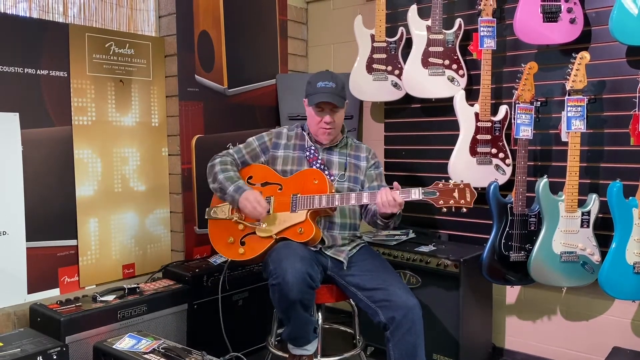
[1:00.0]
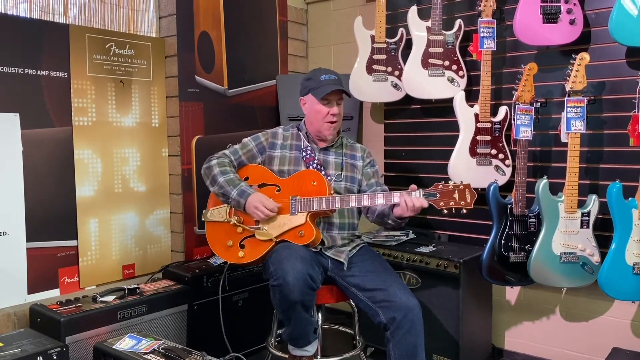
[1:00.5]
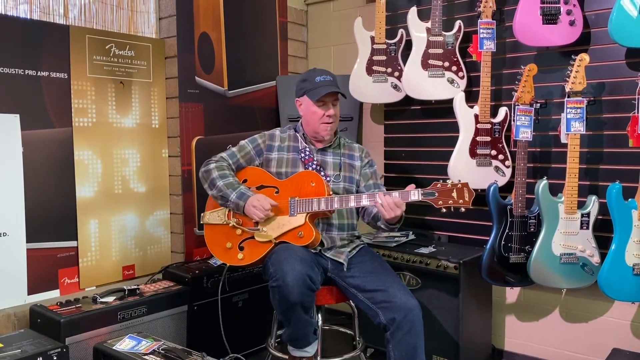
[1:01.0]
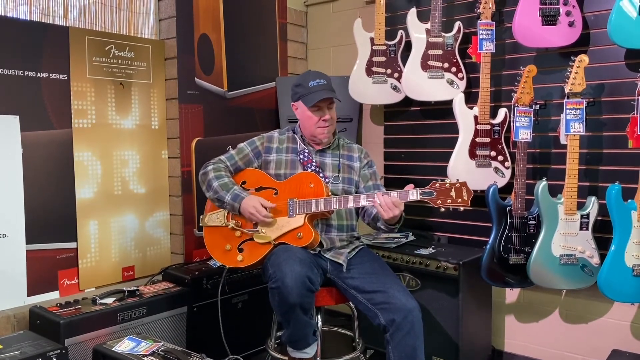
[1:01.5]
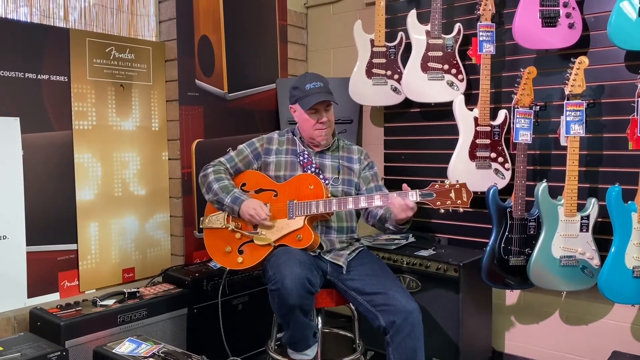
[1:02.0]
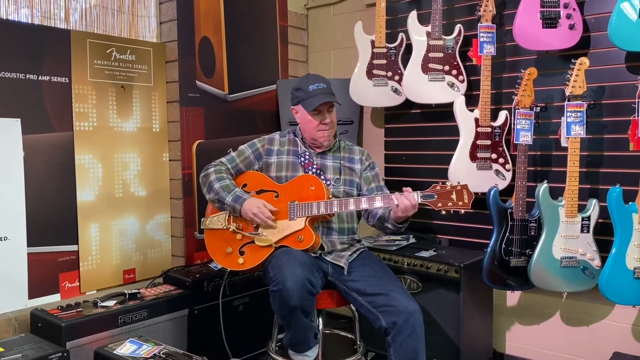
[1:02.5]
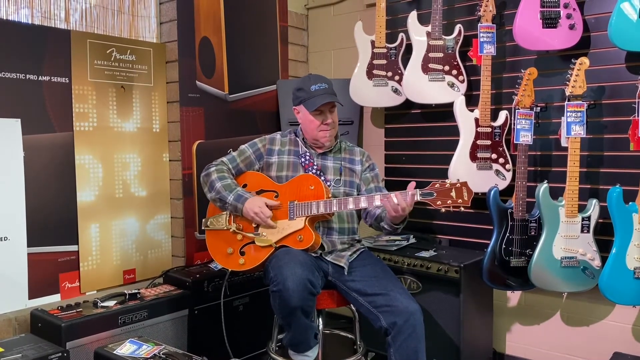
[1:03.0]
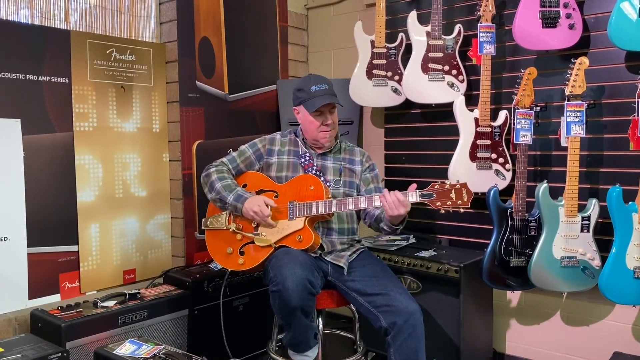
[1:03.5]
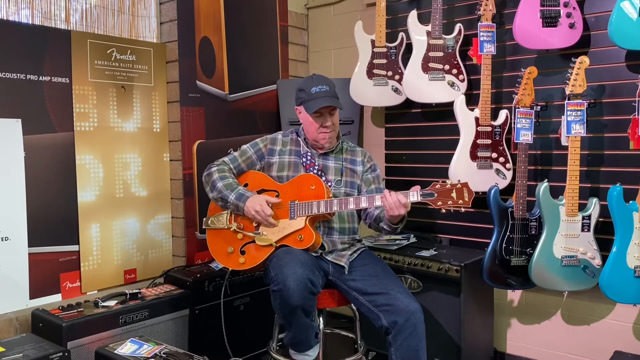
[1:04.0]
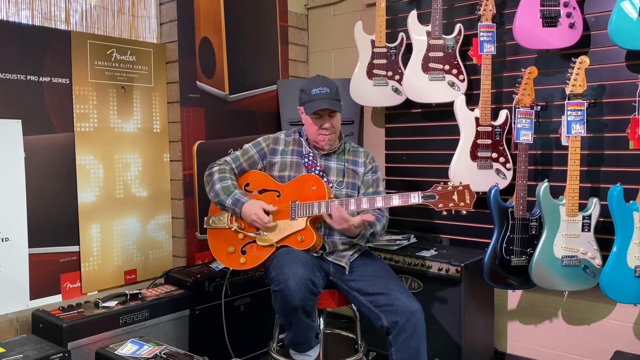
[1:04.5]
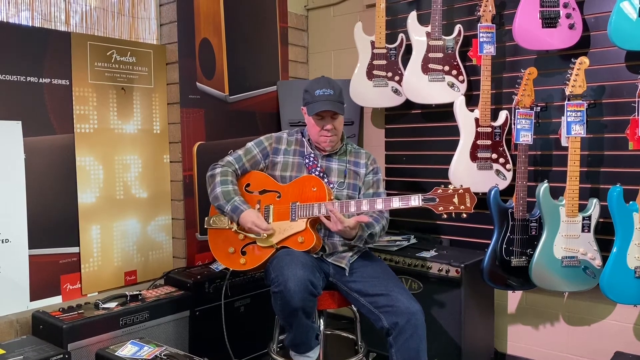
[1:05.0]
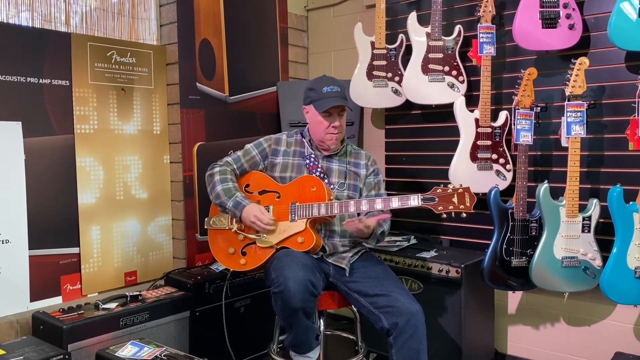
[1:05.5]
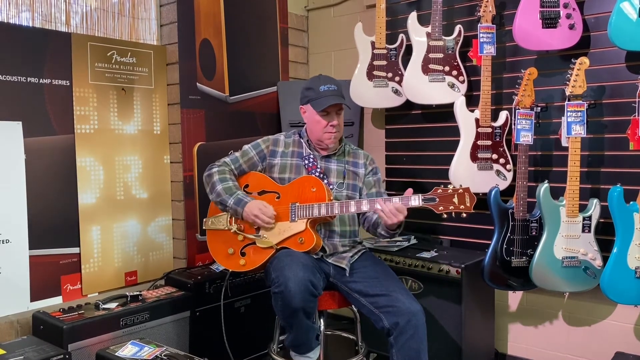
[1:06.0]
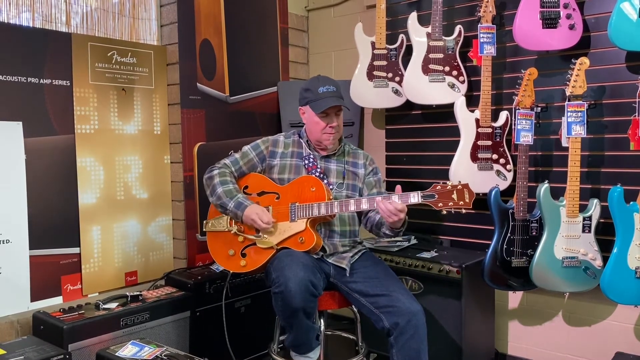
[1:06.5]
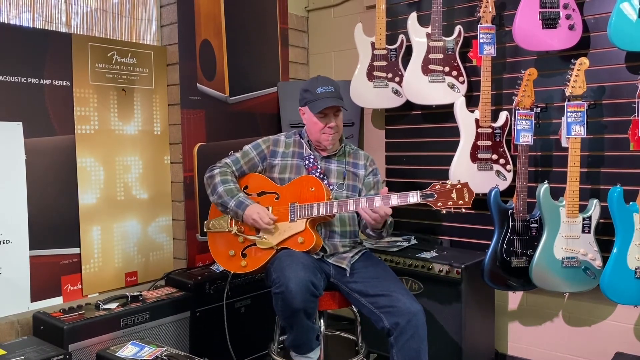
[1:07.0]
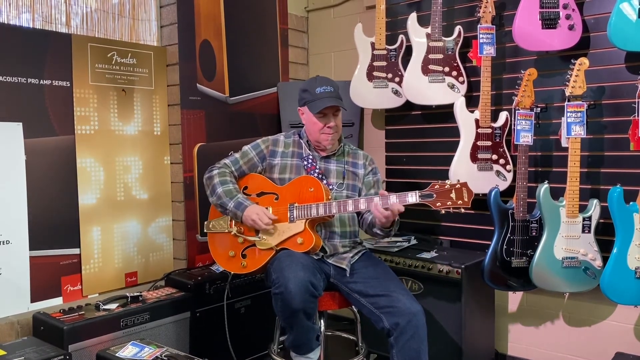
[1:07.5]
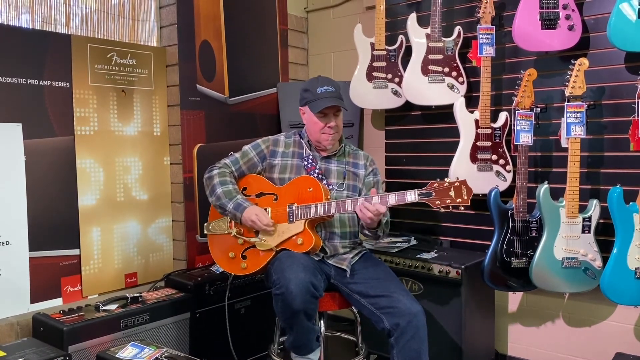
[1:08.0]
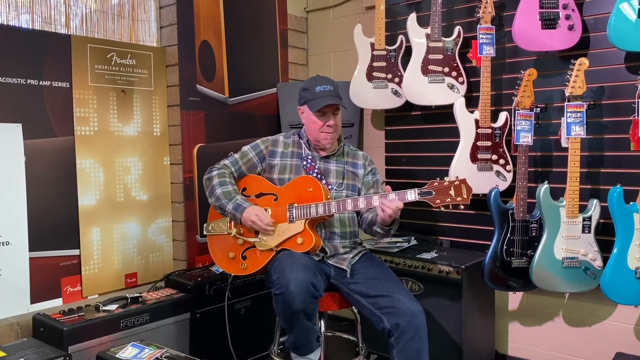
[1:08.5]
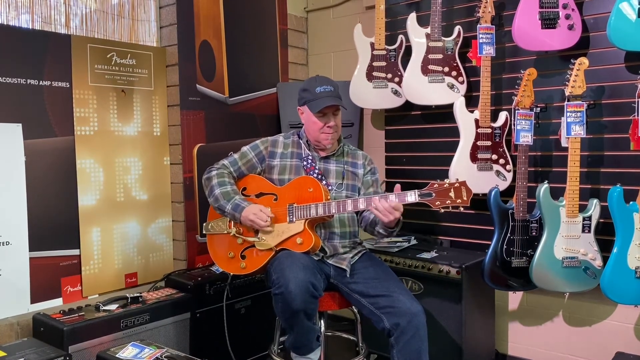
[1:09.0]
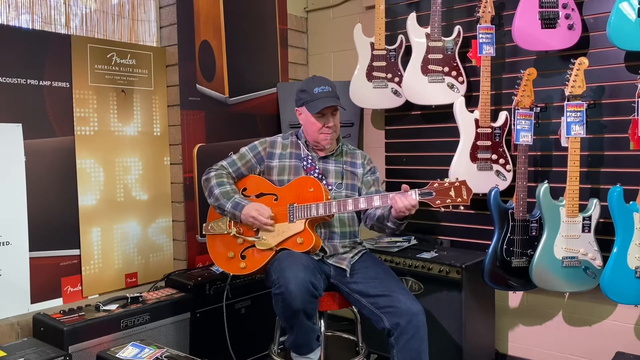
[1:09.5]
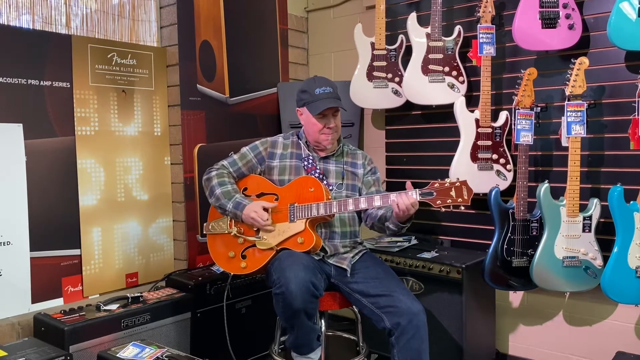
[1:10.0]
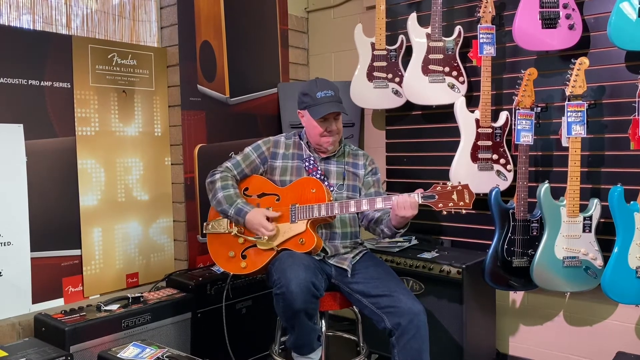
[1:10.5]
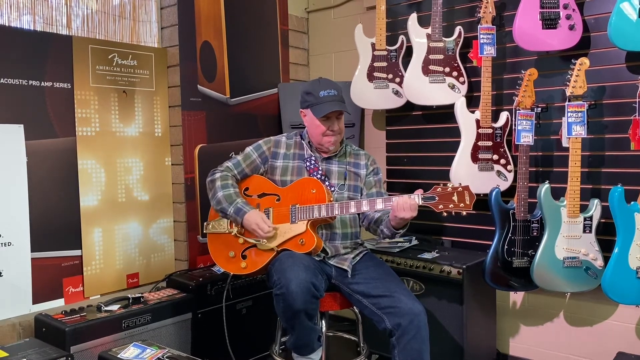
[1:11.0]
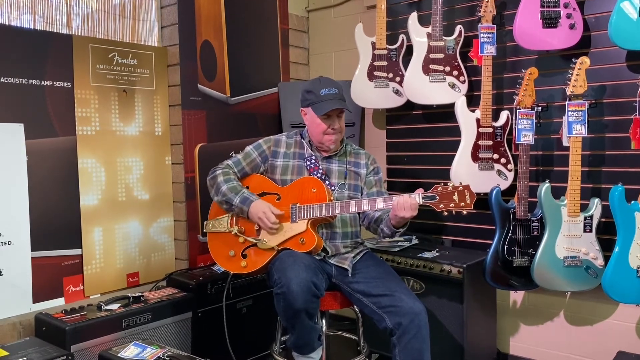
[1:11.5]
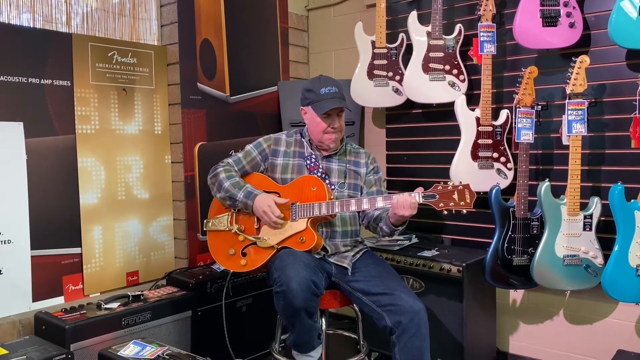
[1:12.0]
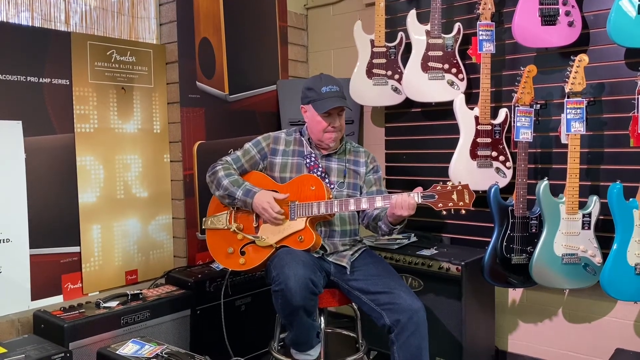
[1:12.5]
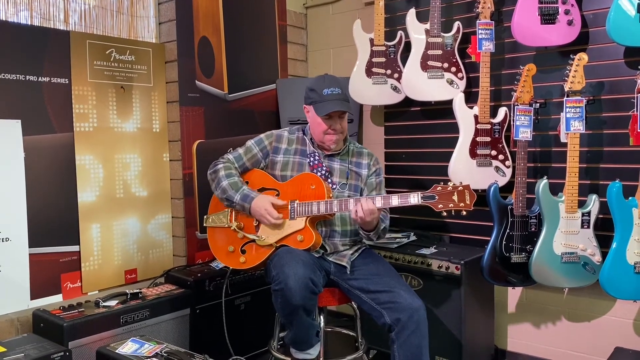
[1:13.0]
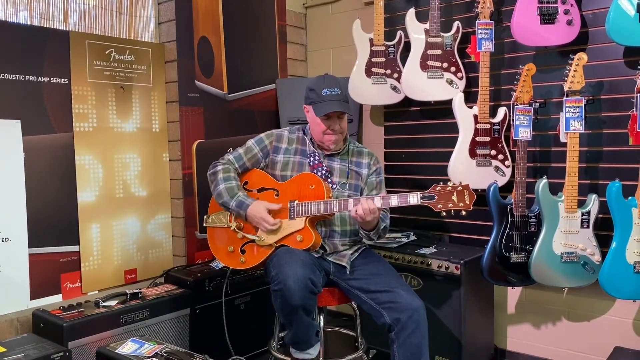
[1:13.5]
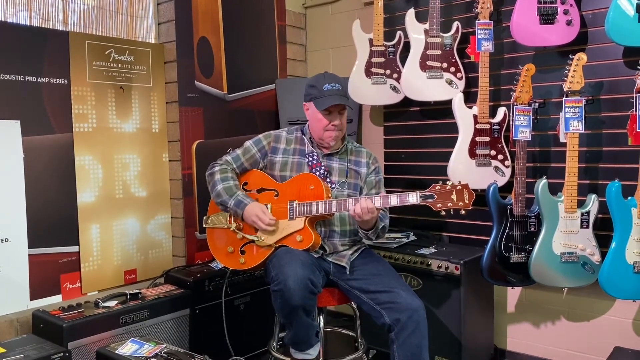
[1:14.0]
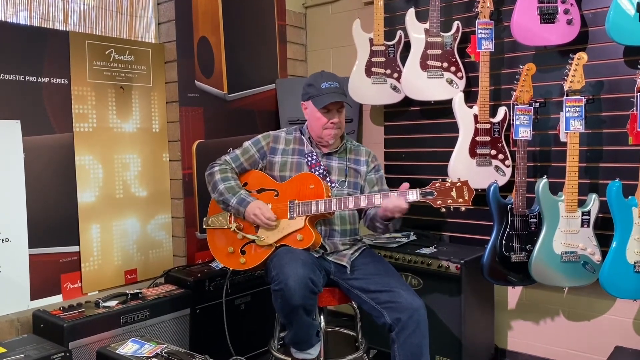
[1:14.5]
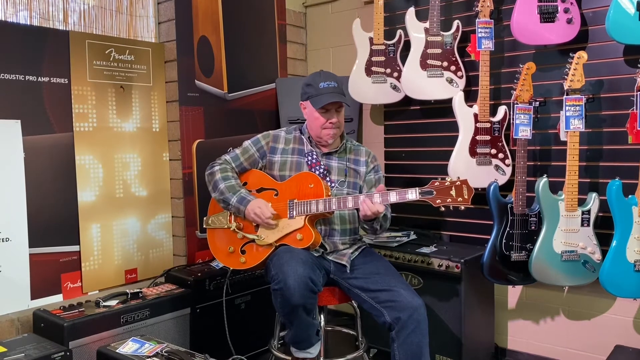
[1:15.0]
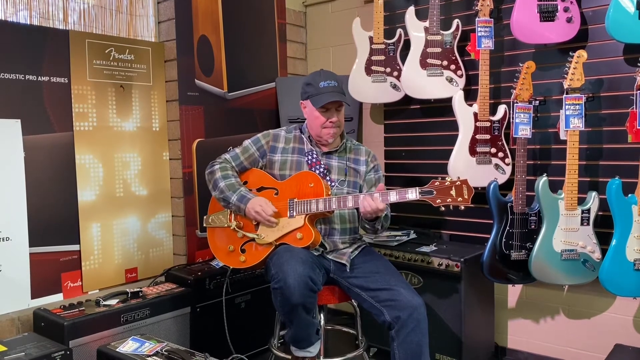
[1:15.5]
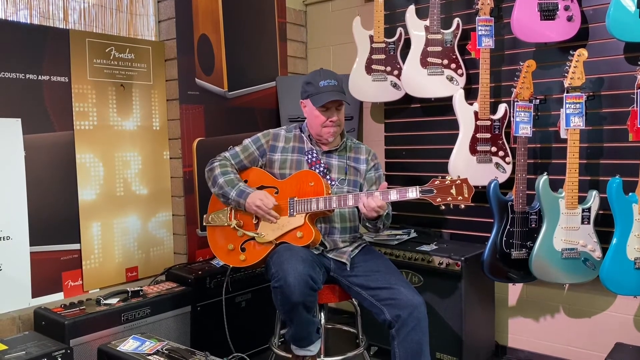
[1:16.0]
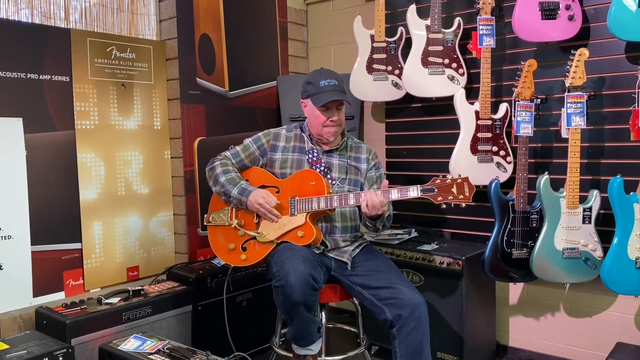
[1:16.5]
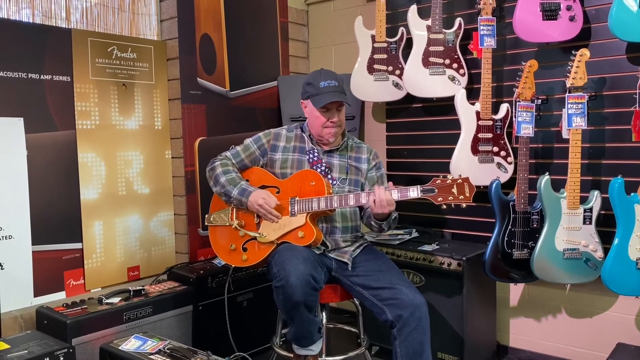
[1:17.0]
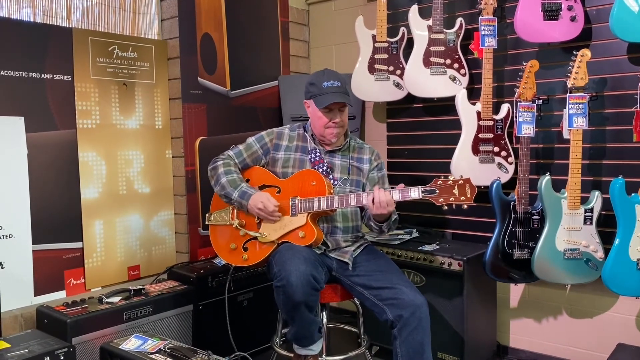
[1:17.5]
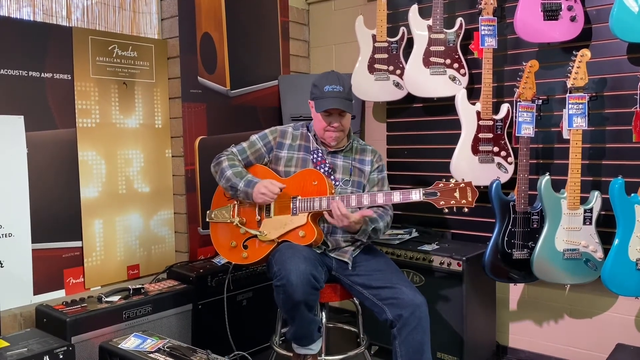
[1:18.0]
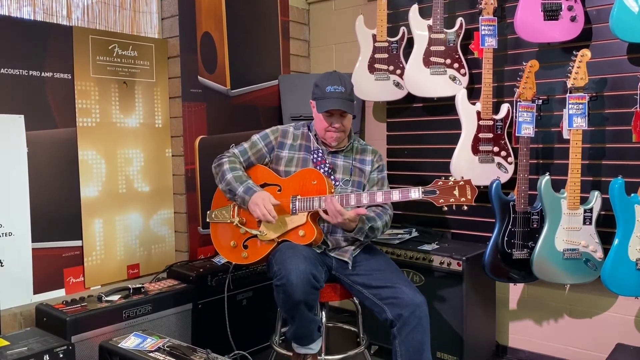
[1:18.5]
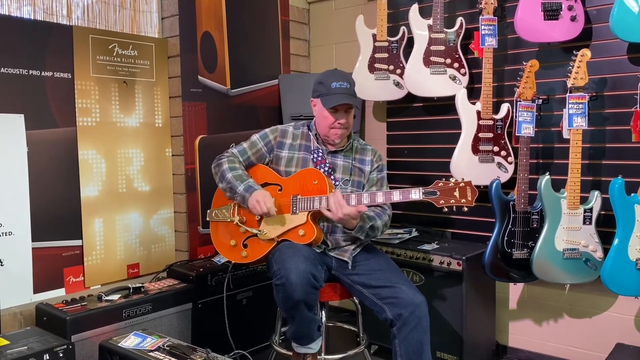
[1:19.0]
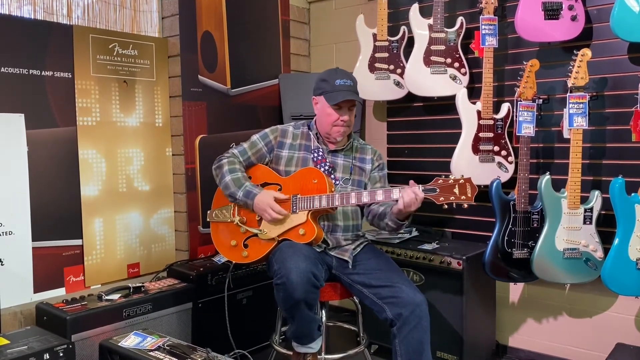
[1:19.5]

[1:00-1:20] The man continues strumming the guitar with his right hand while moving his left hand up and down, getting different sounds out of it. He seems to be testing the guitar rather than playing an actual song, going to different strings and strumming, apparently as a demonstration of how it sounds. He wears a dark green and white flannel shirt. A strap that holds the guitar is around his neck; it hangs lopsided in a broken L shape down the middle of his shirt, not attached to the shirt, and looks like it is just sitting on top of him.